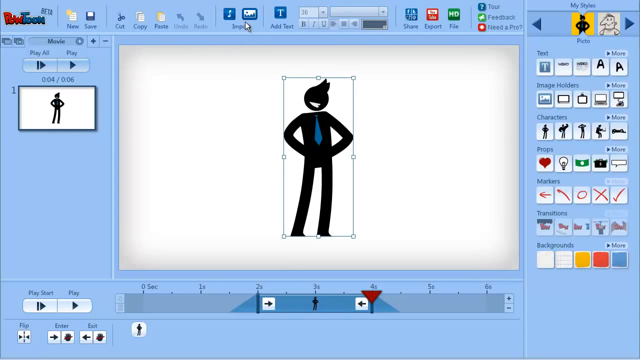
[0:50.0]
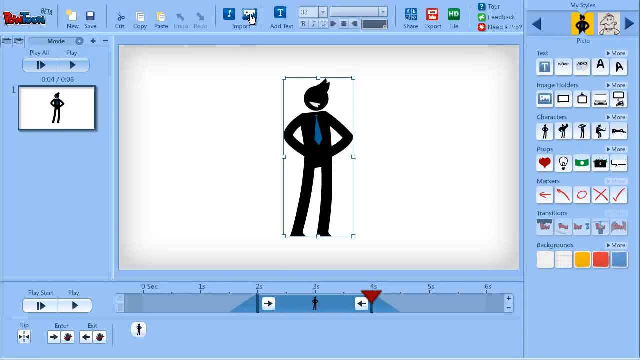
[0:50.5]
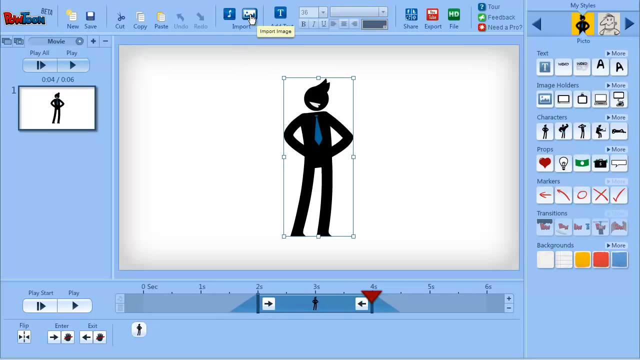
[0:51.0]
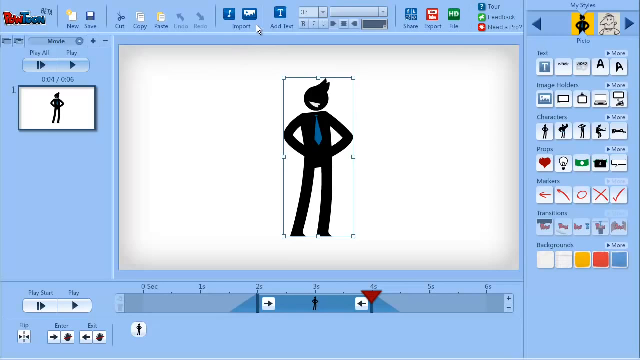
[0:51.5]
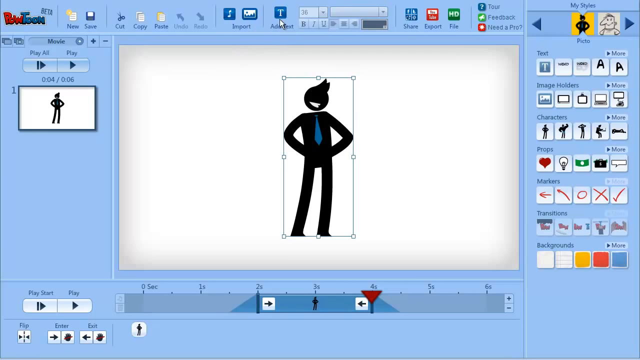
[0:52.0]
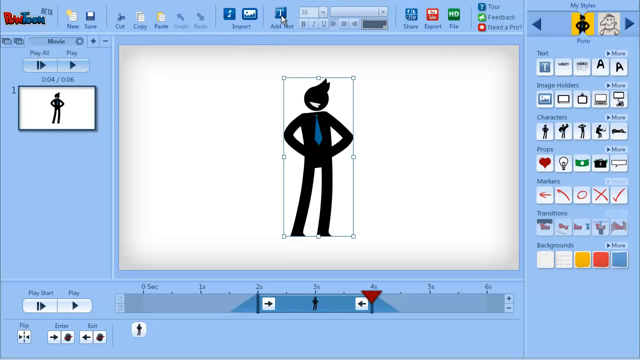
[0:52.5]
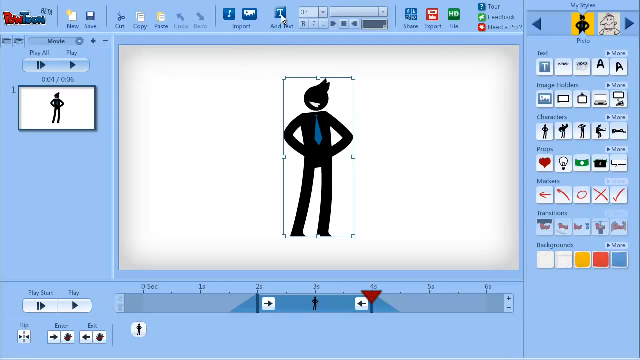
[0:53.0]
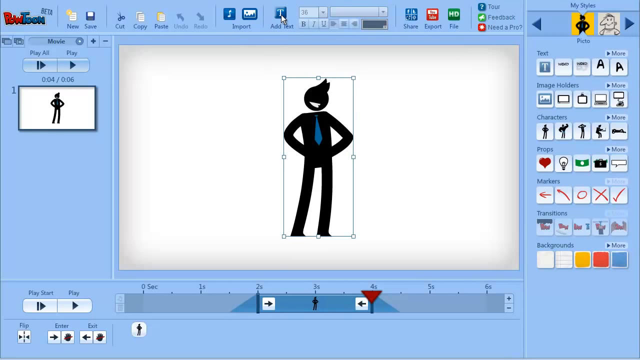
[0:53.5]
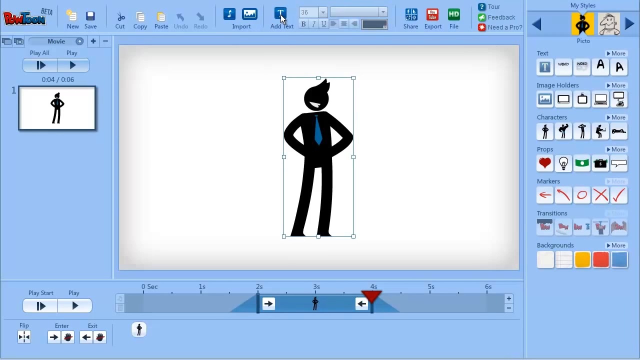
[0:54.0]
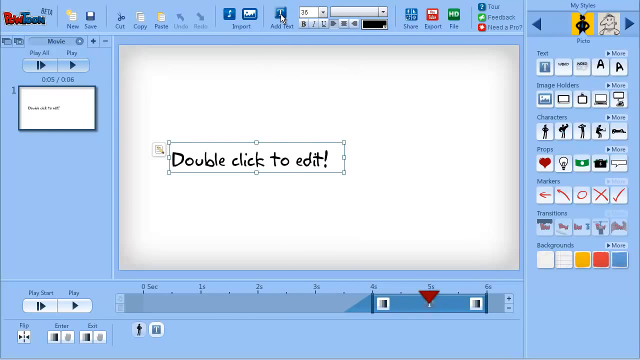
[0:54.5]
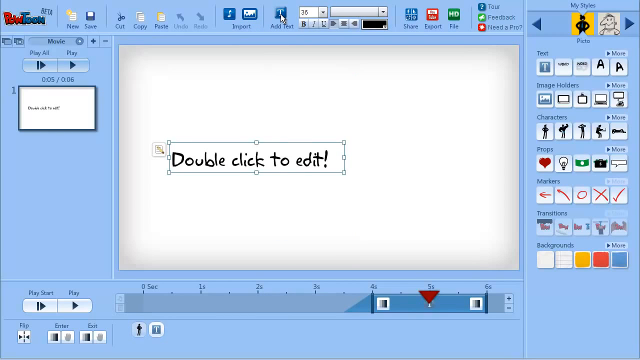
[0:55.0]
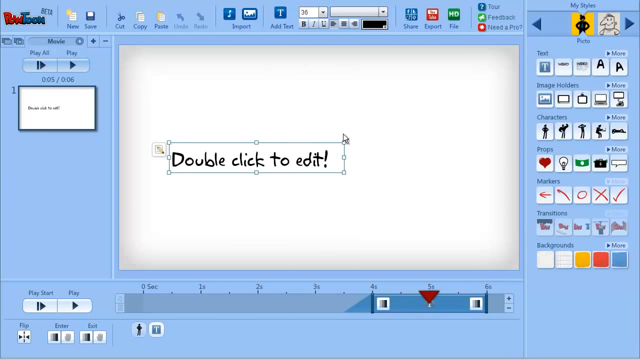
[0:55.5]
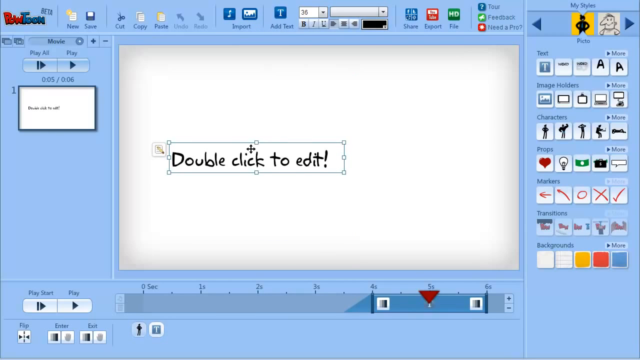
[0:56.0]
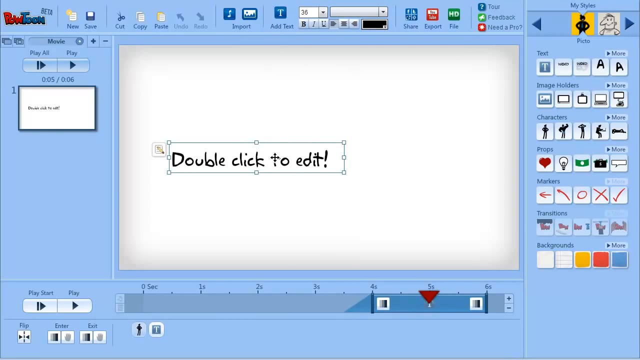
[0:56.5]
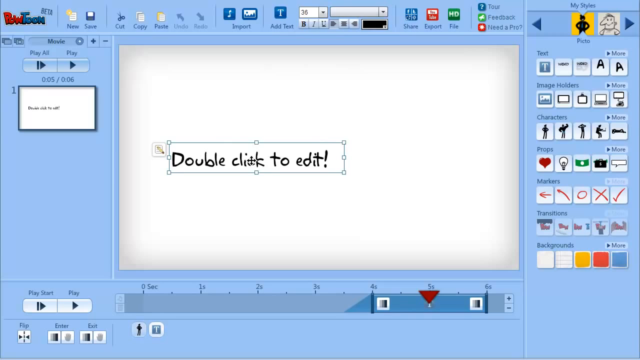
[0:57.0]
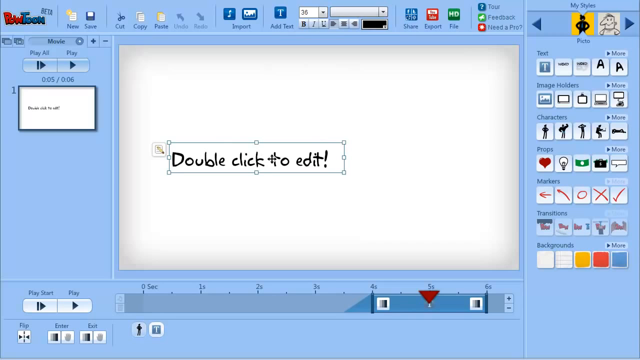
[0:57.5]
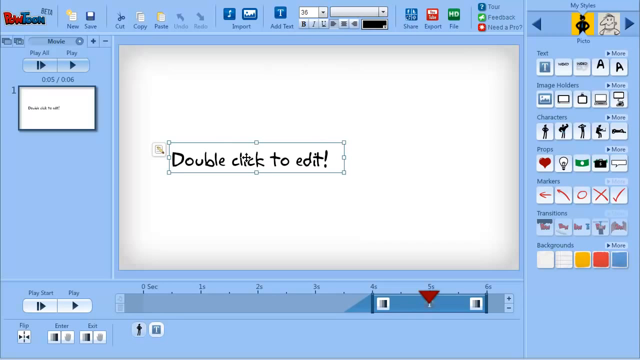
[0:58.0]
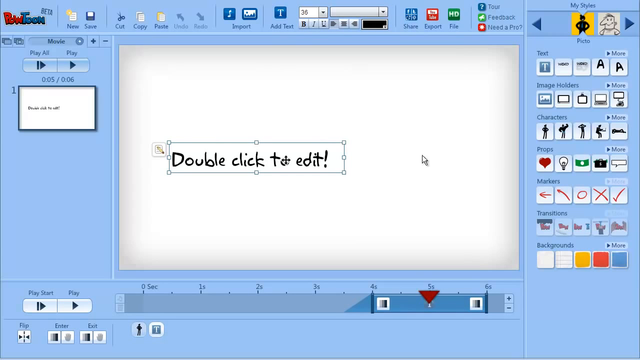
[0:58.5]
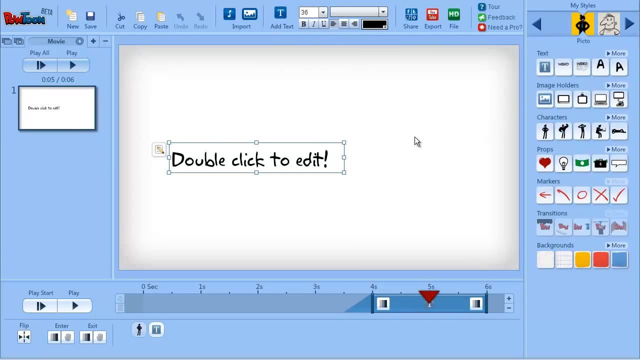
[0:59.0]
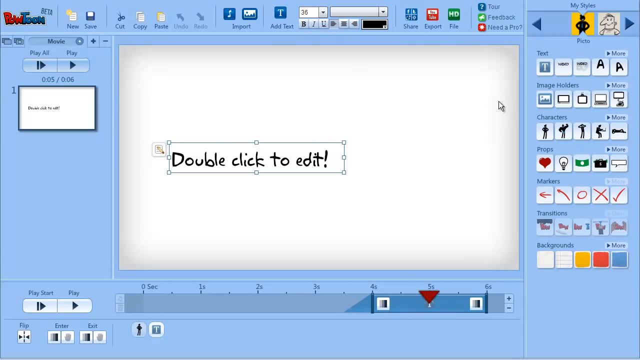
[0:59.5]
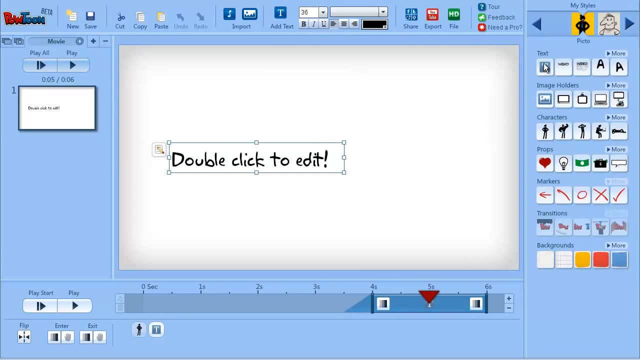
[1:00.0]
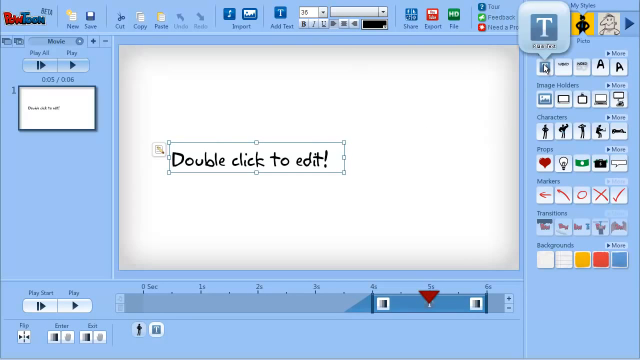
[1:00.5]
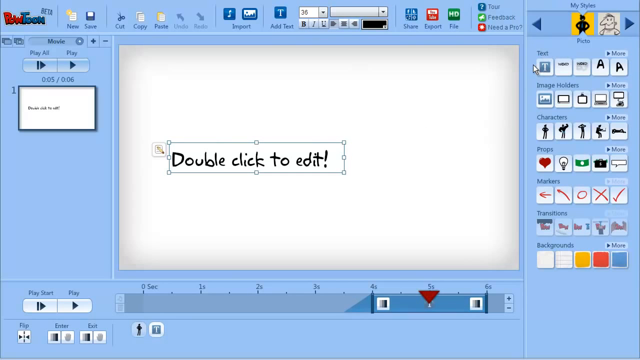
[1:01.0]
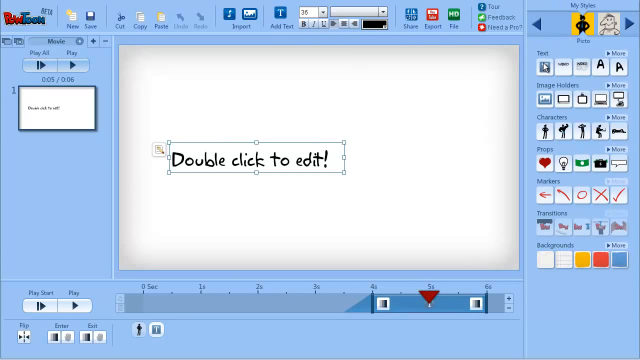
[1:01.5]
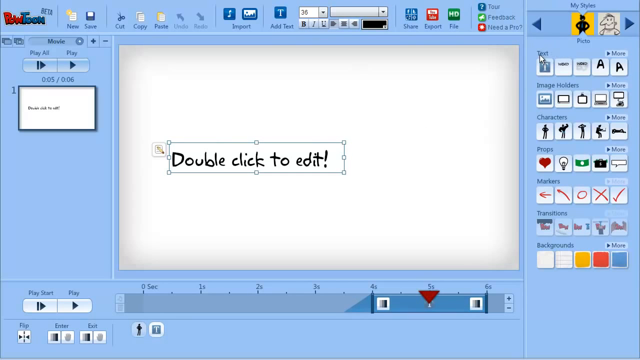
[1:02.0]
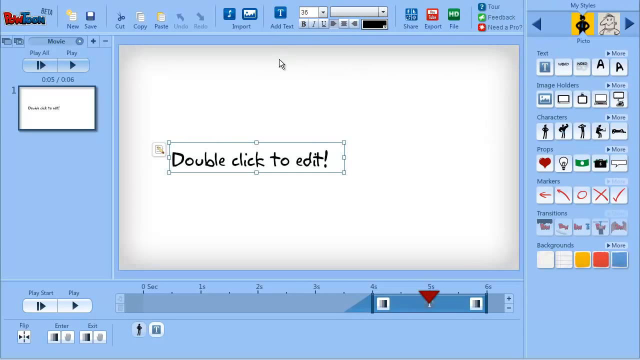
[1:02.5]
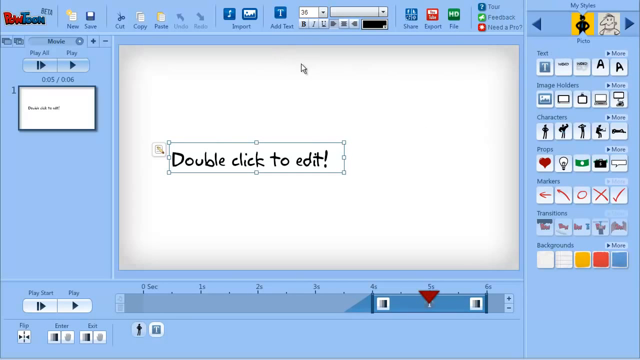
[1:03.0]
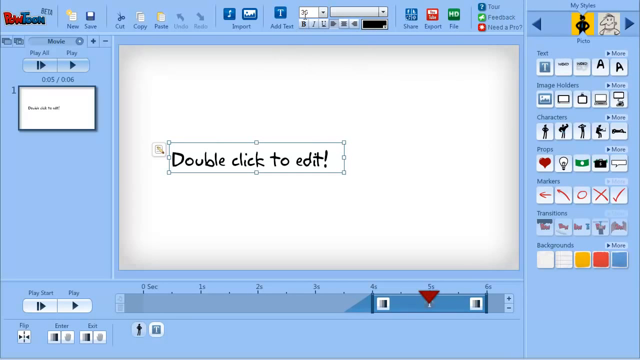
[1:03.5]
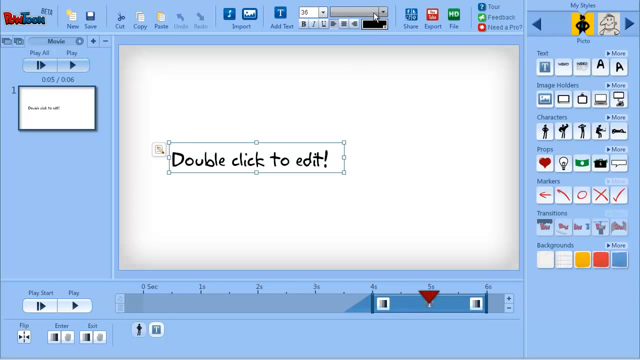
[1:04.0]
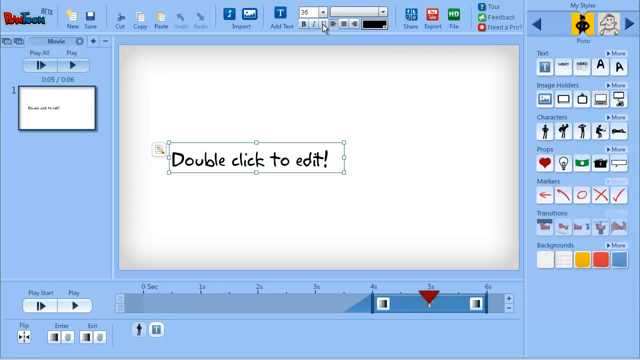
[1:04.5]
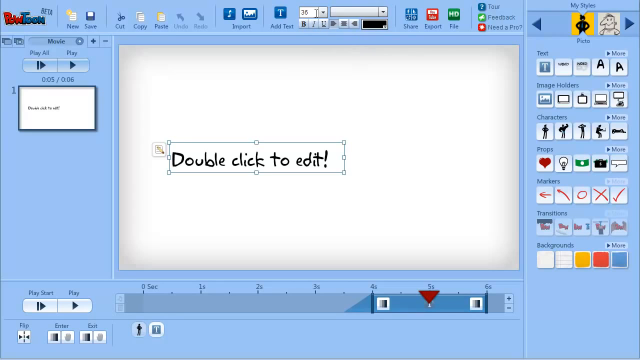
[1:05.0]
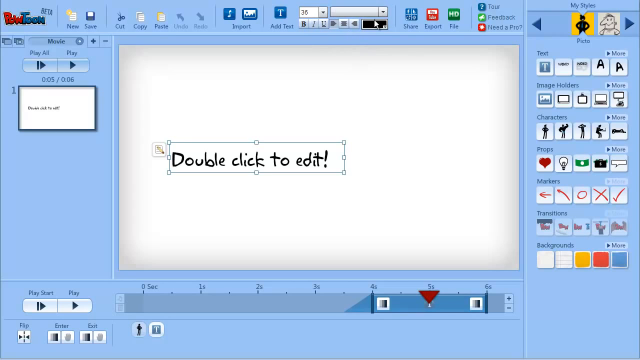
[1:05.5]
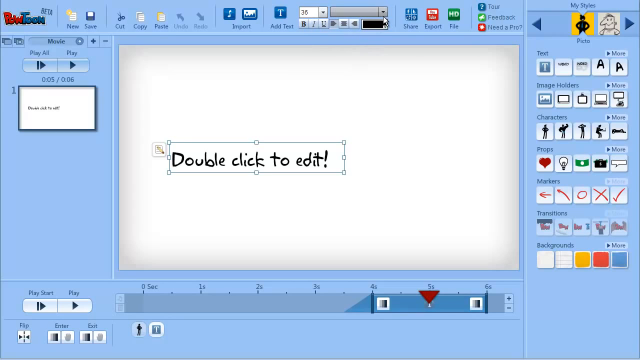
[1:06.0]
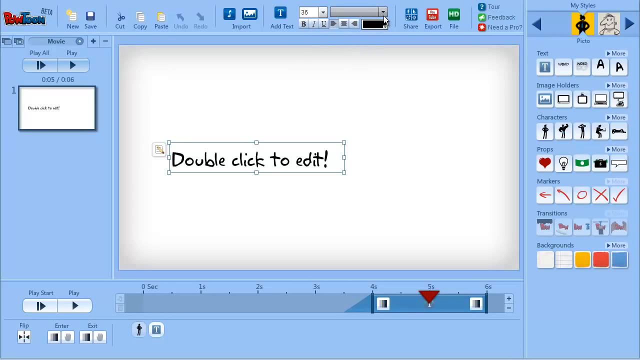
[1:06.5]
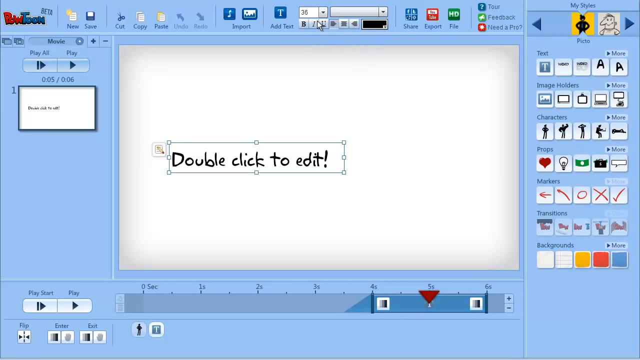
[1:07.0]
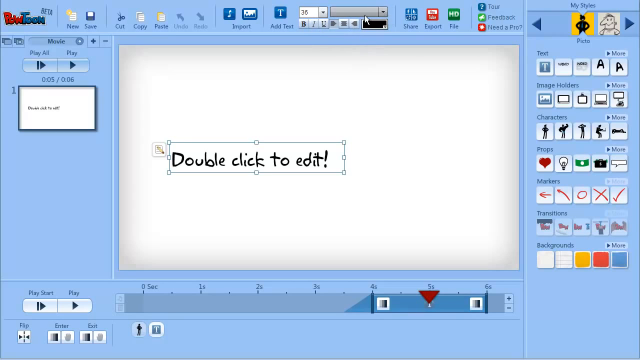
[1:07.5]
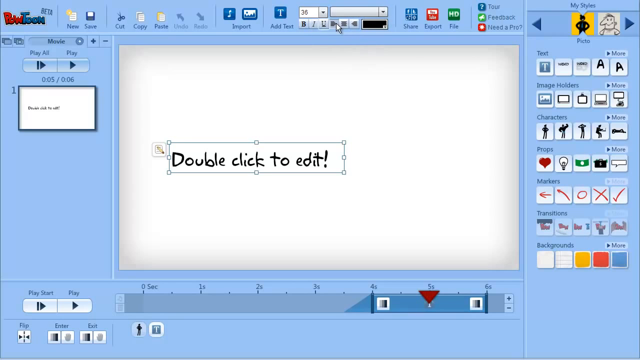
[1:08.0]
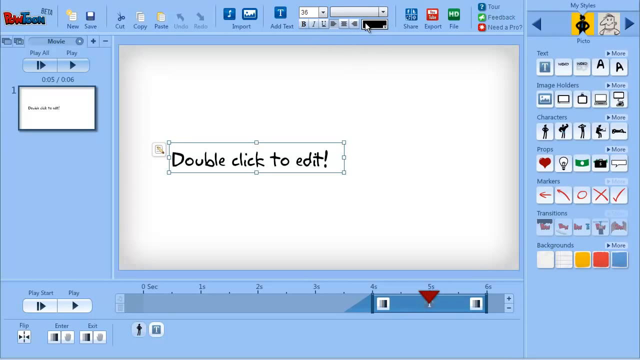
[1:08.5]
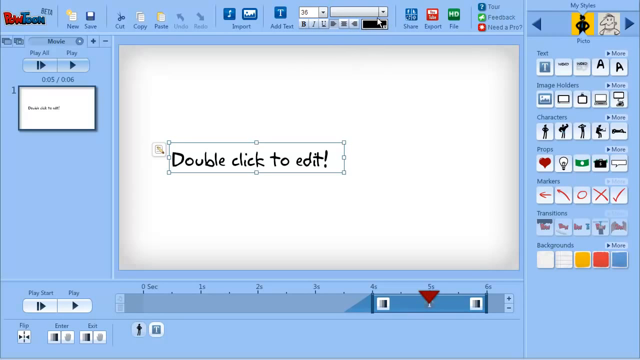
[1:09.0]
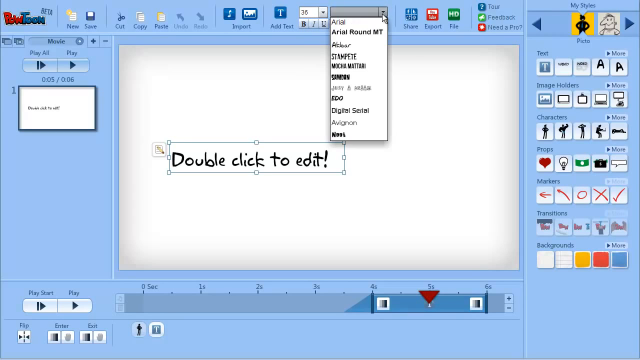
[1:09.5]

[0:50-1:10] A small box surrounded by a square outline appears on the screen with the text "double click to edit", possibly default text meant to be replaced. The thick stick figure with the jack-in-the-box head, tuft of hair and blue necktie remains. The mouse moves around the screen, apparently looking for a type of text, then goes back to the drawing; the clicks happen too quickly to make out. The presentation window of the software is a soft sky blue/baby blue, with the options mainly on the top and right-hand panels; most of the drawing tools seem to be on the right, and most of the main editing tabs are on the top.